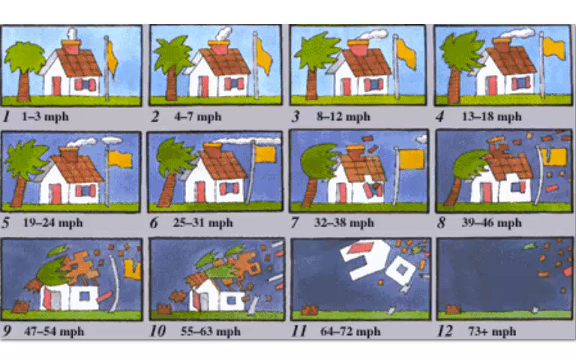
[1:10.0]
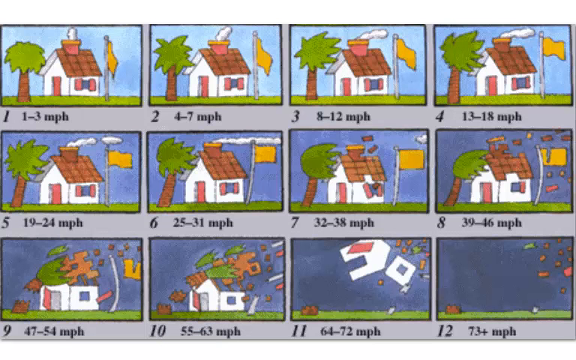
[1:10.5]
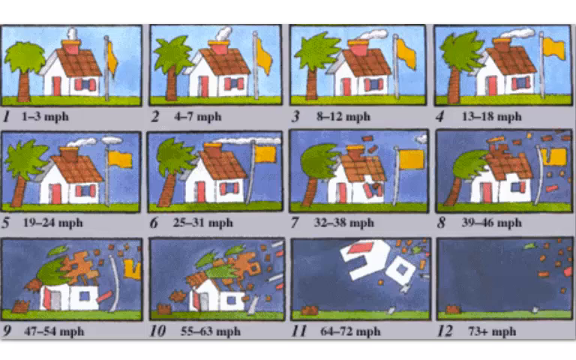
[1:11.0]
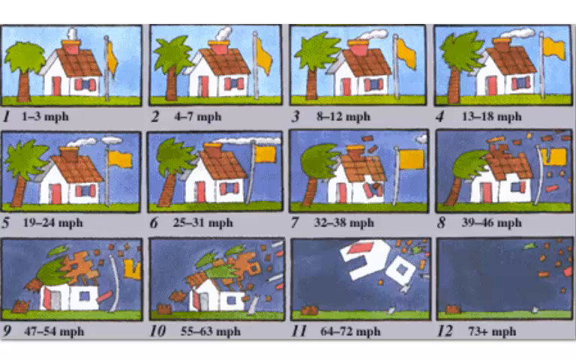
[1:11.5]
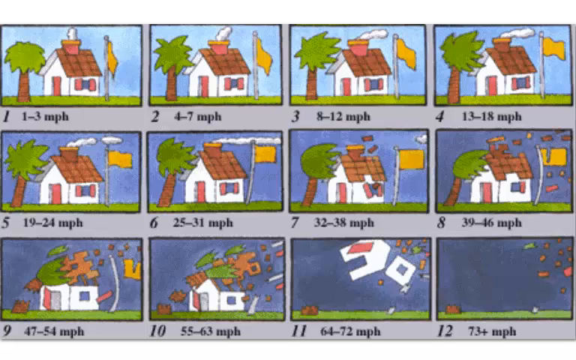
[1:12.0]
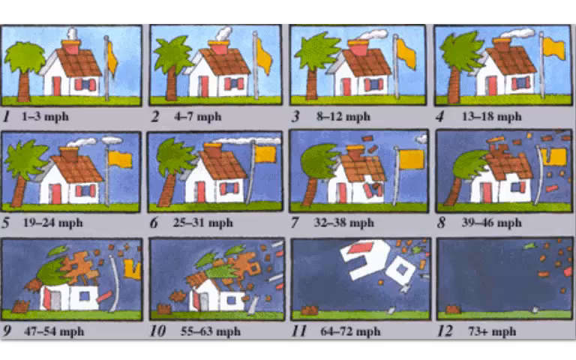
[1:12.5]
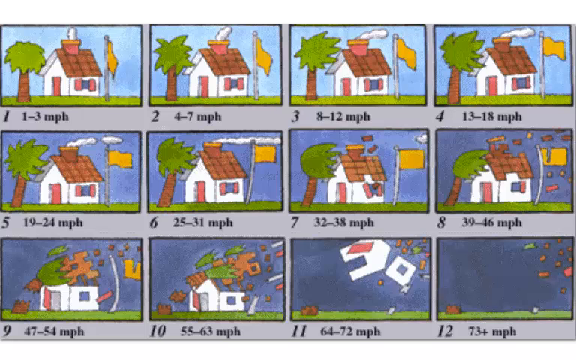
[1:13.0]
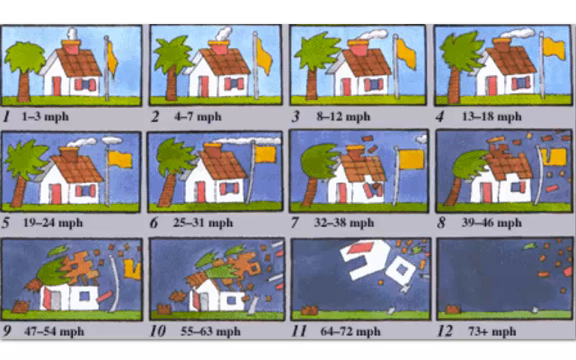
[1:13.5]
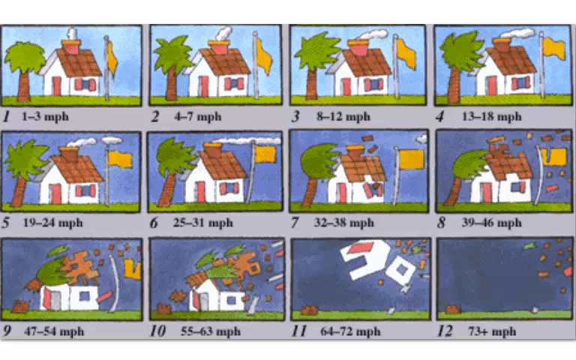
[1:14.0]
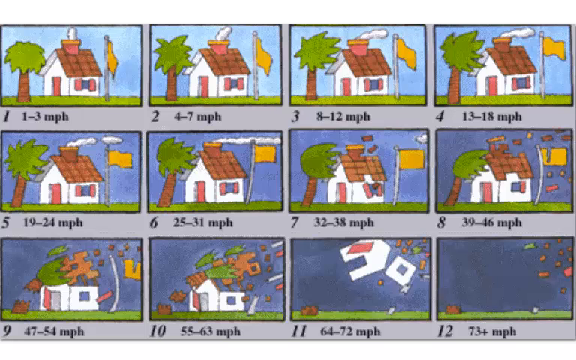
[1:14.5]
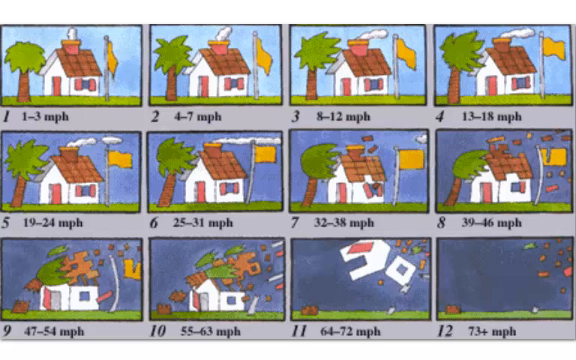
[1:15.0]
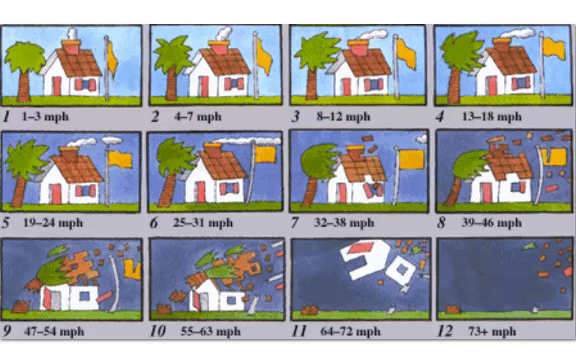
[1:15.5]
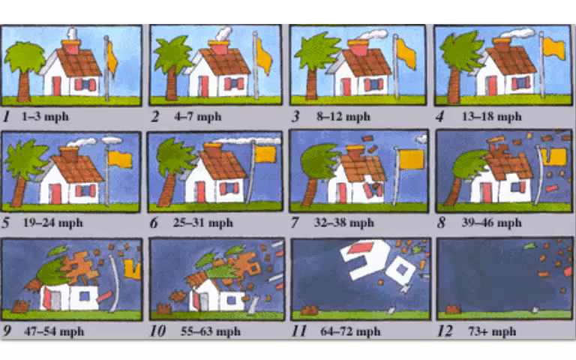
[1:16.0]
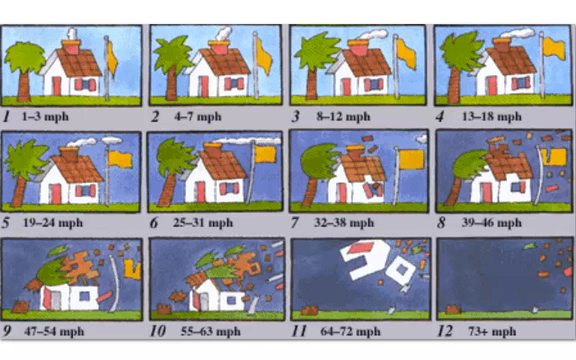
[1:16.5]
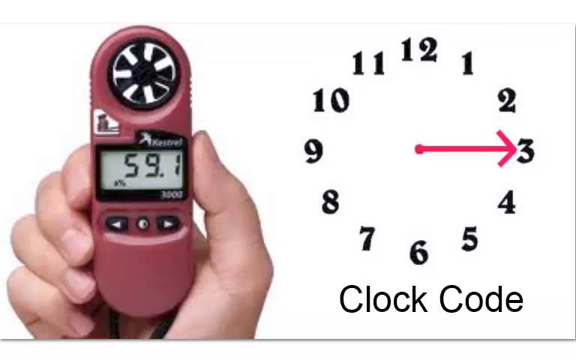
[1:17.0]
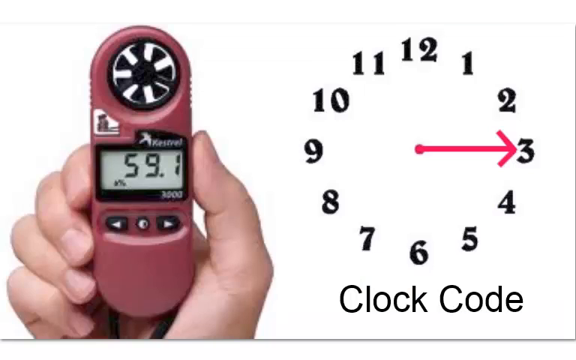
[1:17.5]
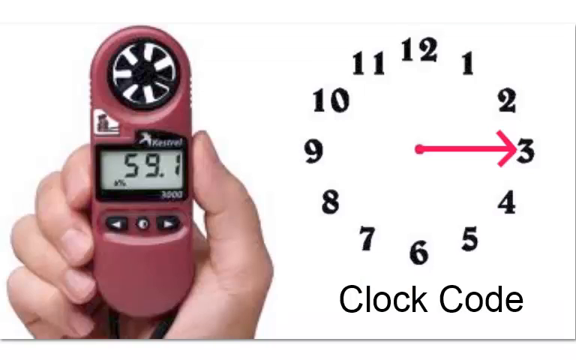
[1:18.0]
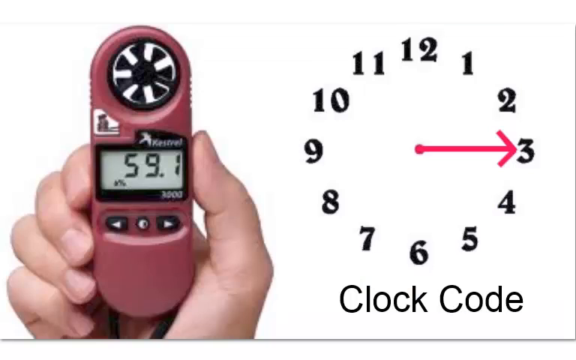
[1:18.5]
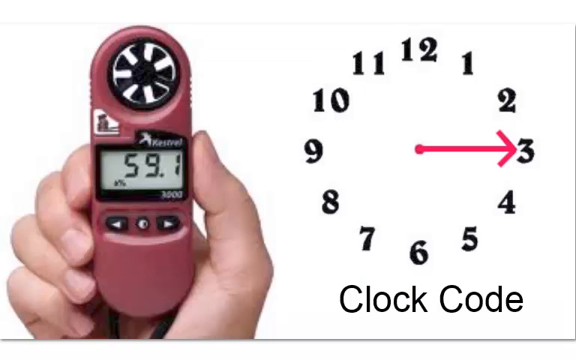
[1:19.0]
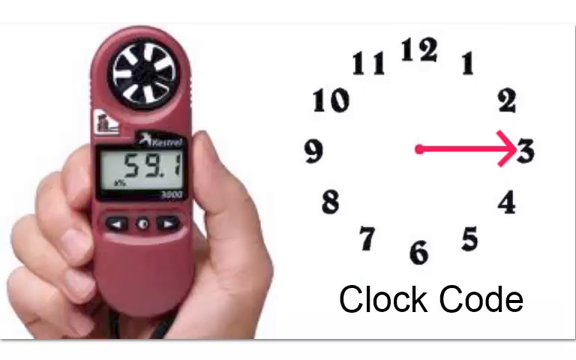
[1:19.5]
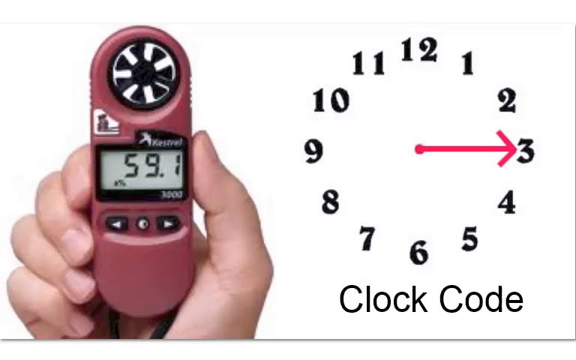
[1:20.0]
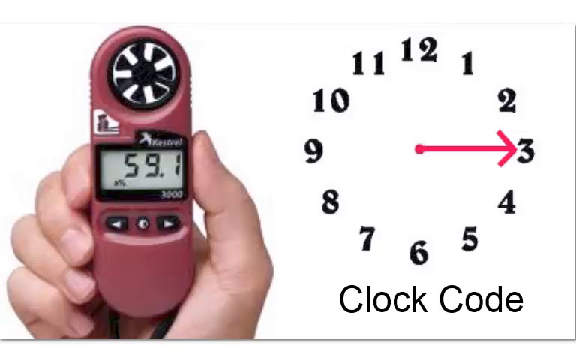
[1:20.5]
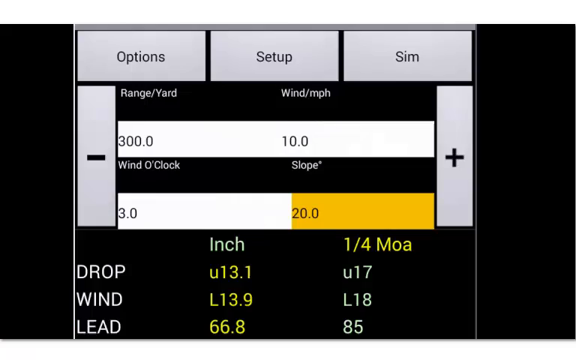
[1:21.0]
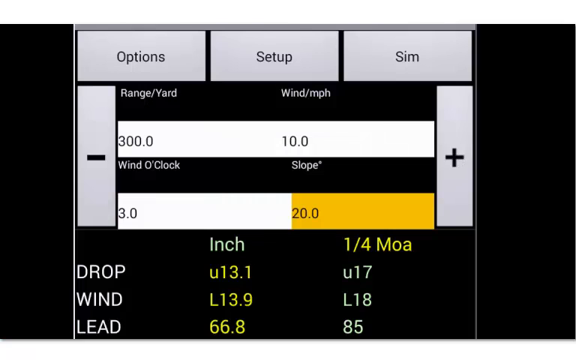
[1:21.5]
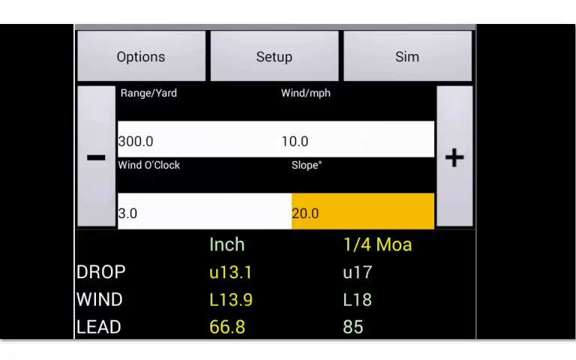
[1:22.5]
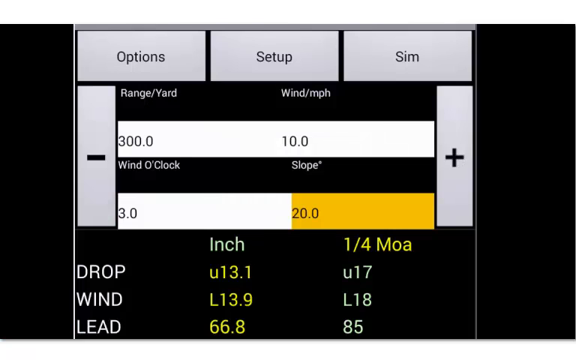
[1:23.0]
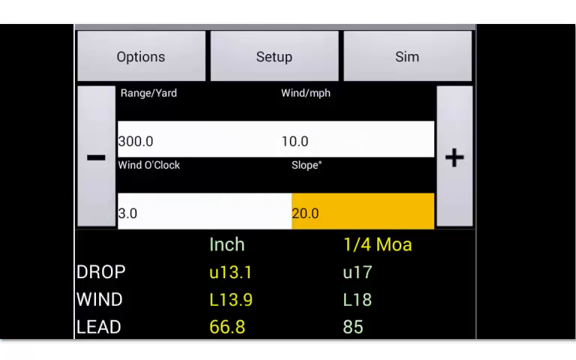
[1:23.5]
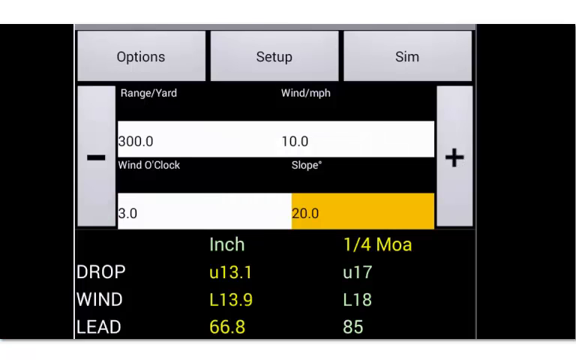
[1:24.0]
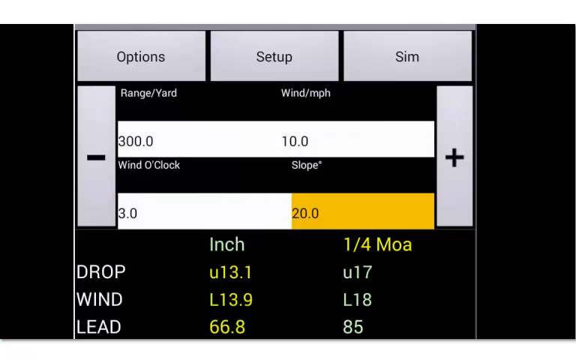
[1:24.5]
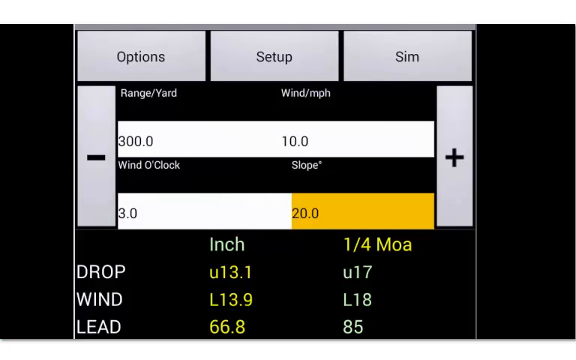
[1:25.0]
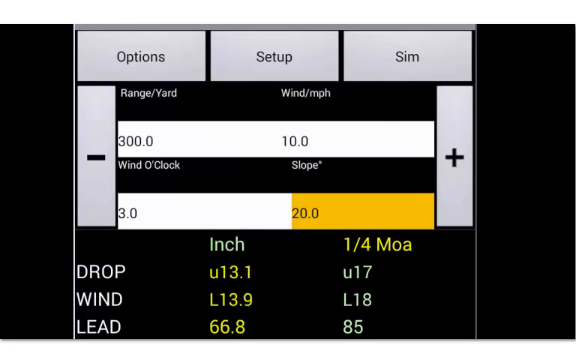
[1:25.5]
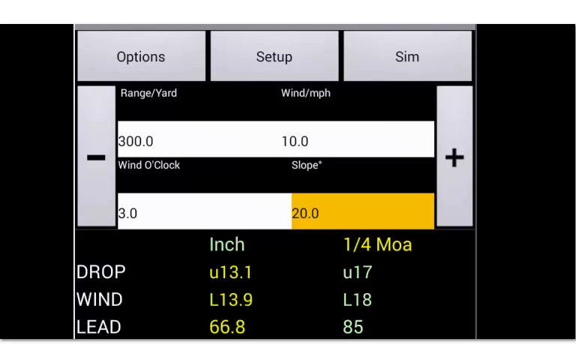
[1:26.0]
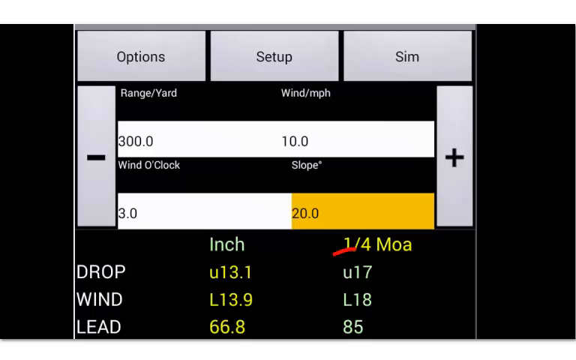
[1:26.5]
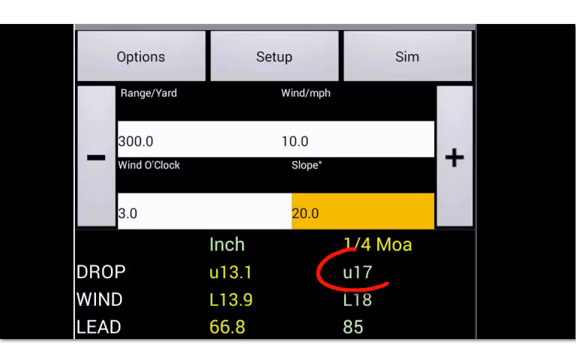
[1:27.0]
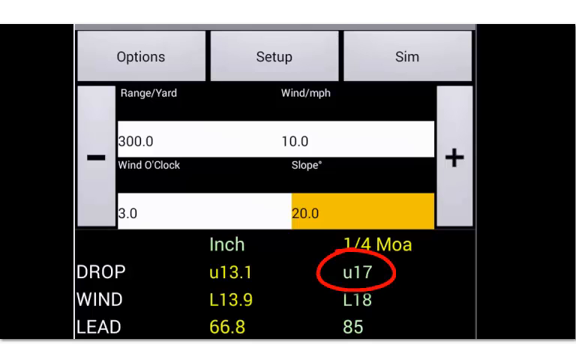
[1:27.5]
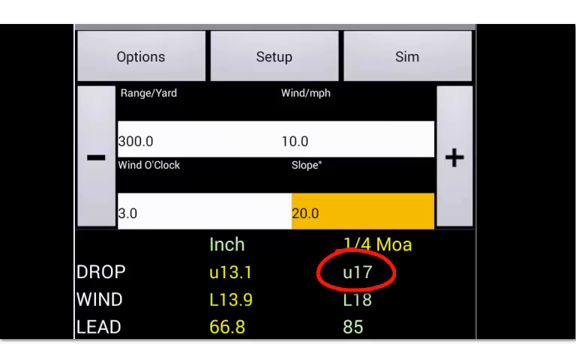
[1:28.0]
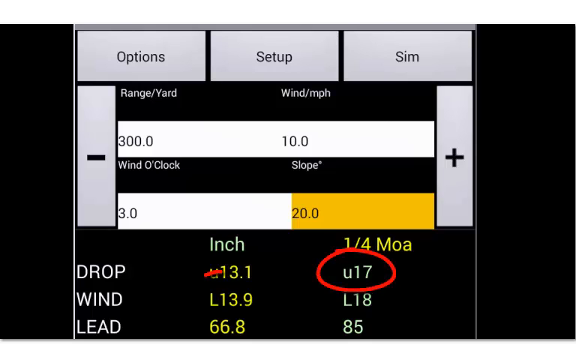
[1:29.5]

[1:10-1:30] An image apparently showing the severity of winds appears, made of 12 images labeled underneath on the left, numbered 1 to 4 in the first row, 5 to 8 in the next and 9 to 12 in the last, starting from 1 to 3 miles per hour and increasing. At the first level the house is not really damaged: a white house with a black roof and a chimney that is red and orange at the top. The view changes to a white background reading "clock code", with a clock in black numbers and a red hand pointing at the three; the other hand is not visible. A right hand then holds an unidentified tool, the same kind as the orange one but red, showing "59.1". The screen changes to black with boxes of different colors; the first three are gray with black text reading "options", "setup" and "sim". Underneath, white text reads "range / yard" and "wind / MPH", with "300.0" and "10.0" in black. Below that, white text includes "slope", and something at the bottom reading "U17" is circled.